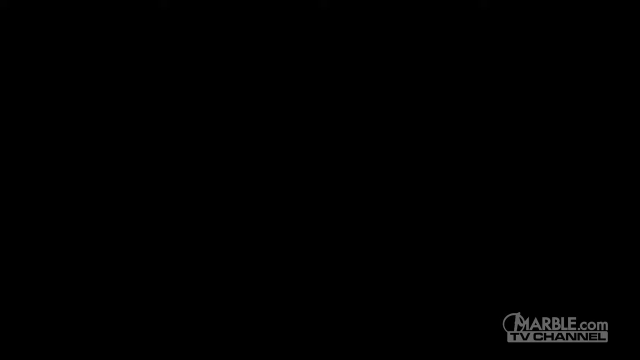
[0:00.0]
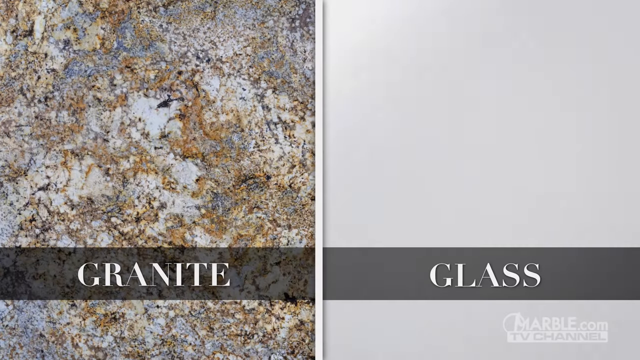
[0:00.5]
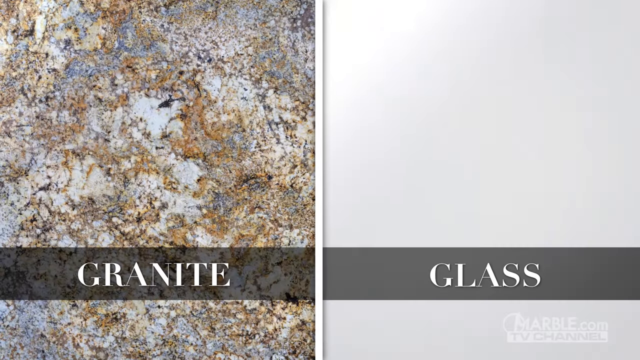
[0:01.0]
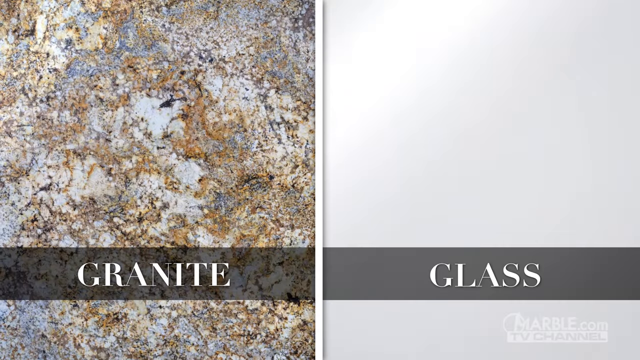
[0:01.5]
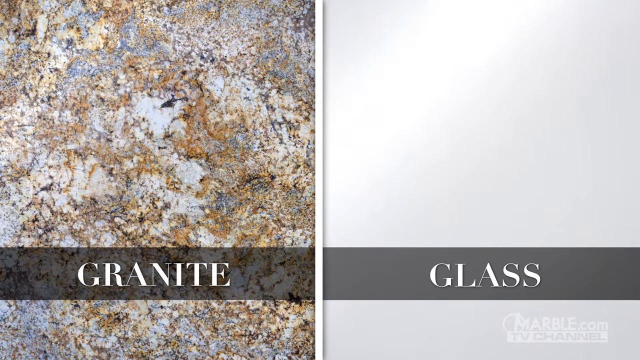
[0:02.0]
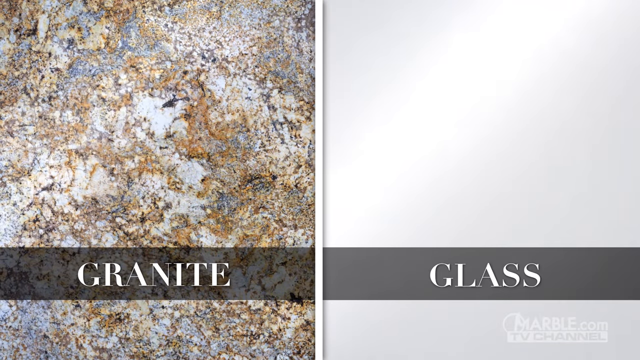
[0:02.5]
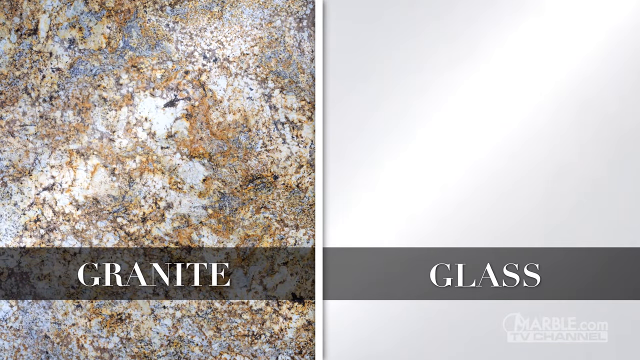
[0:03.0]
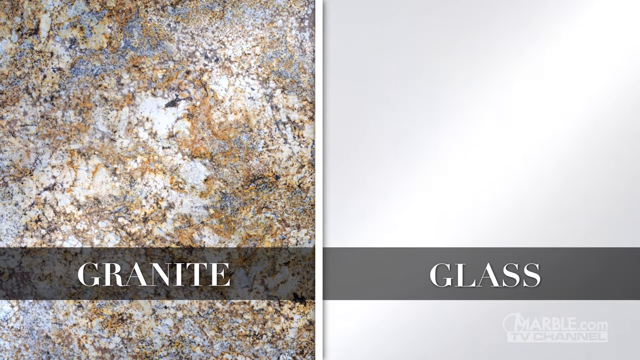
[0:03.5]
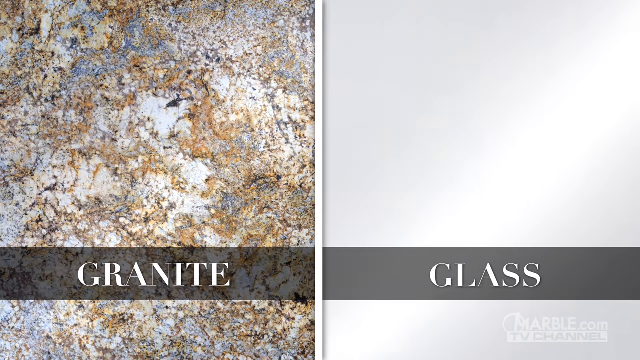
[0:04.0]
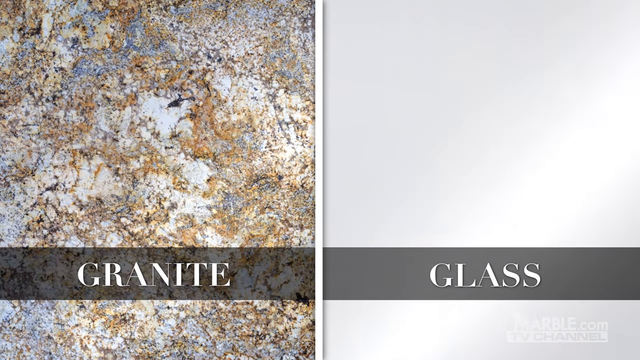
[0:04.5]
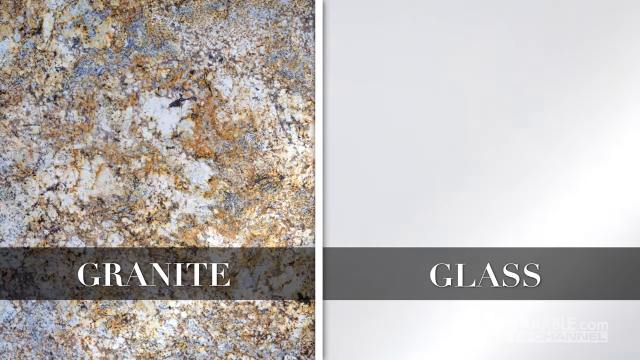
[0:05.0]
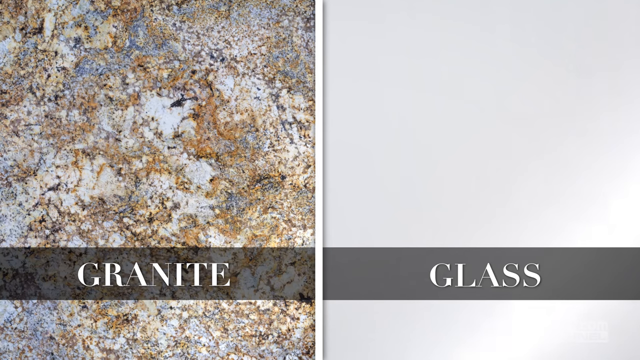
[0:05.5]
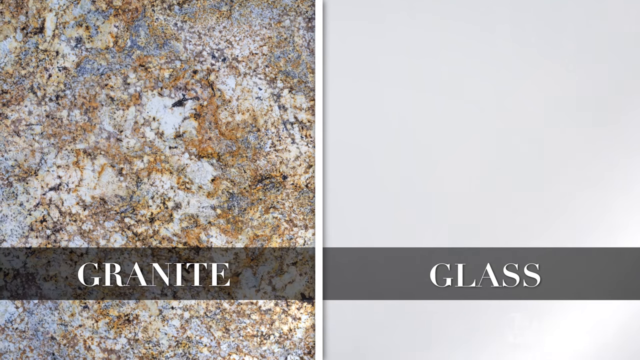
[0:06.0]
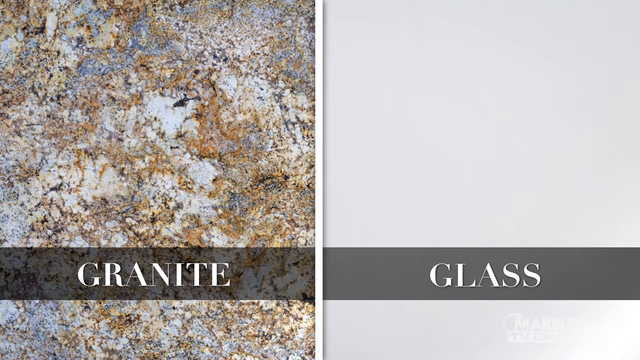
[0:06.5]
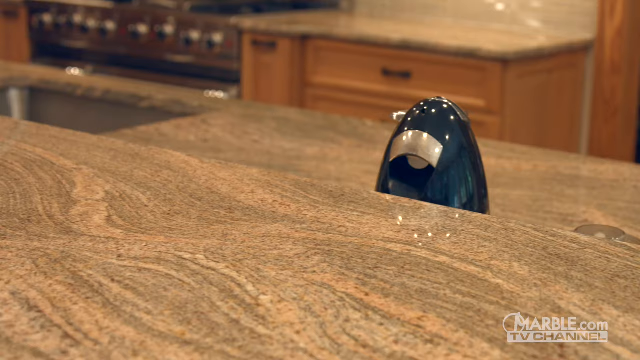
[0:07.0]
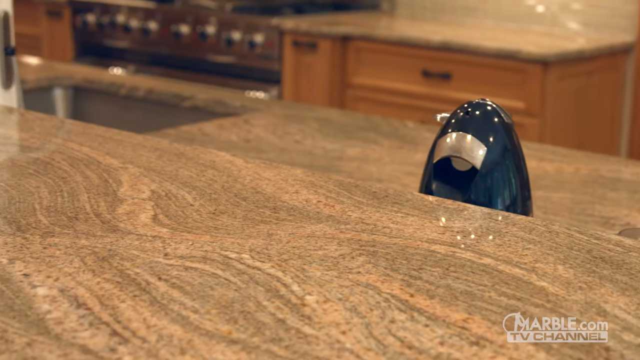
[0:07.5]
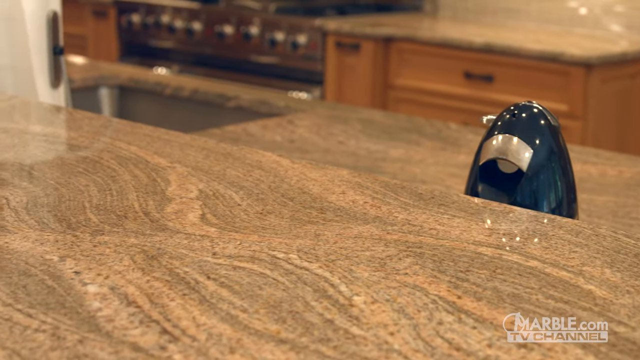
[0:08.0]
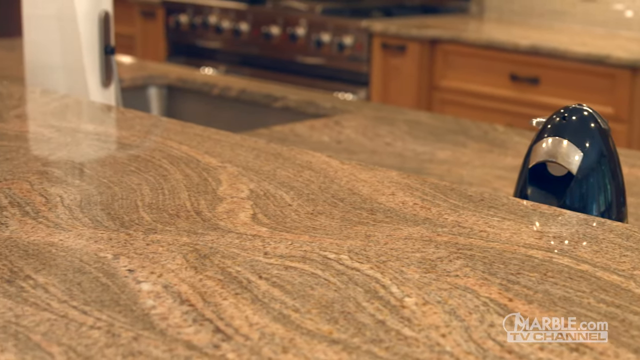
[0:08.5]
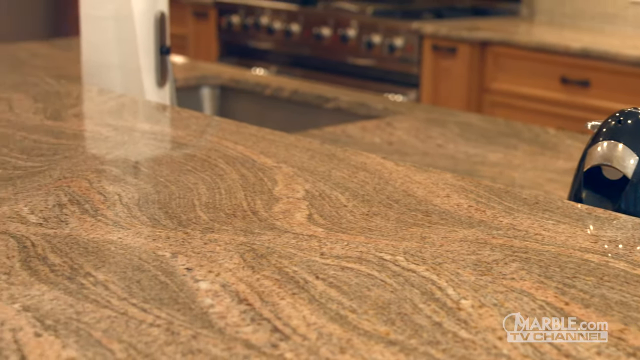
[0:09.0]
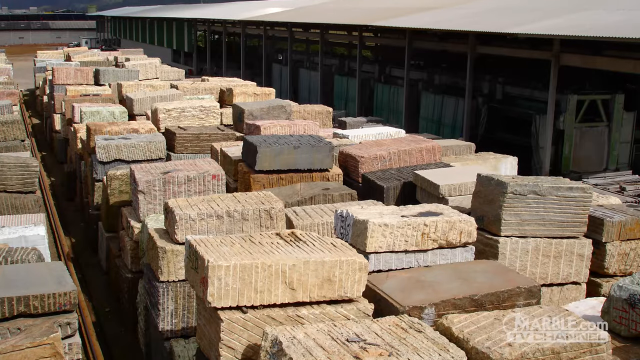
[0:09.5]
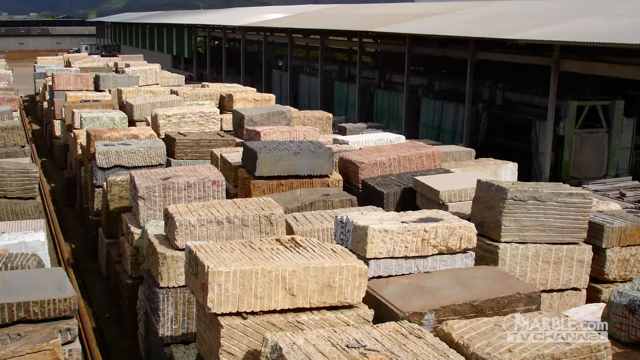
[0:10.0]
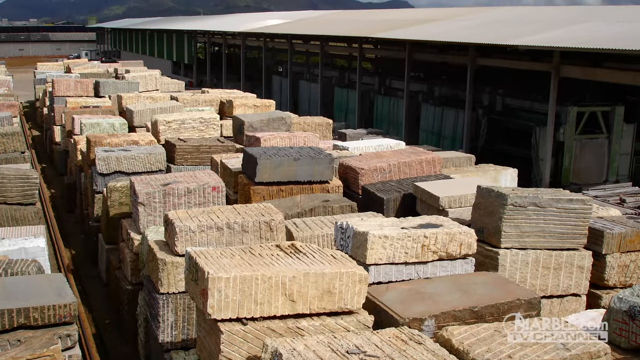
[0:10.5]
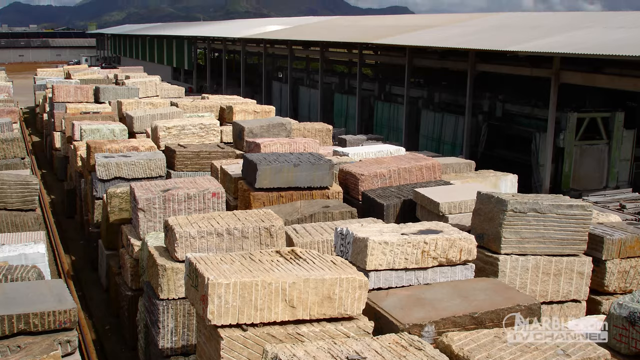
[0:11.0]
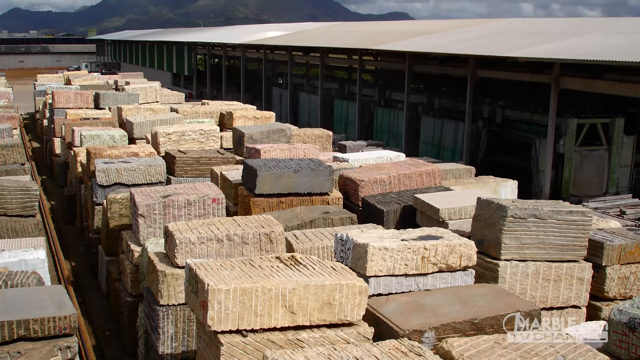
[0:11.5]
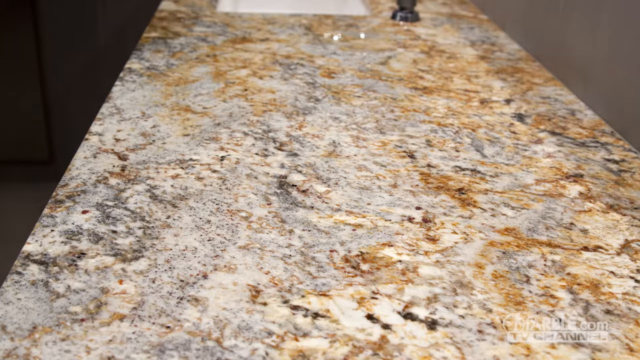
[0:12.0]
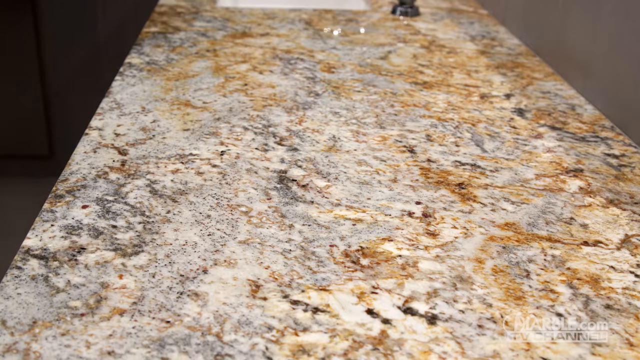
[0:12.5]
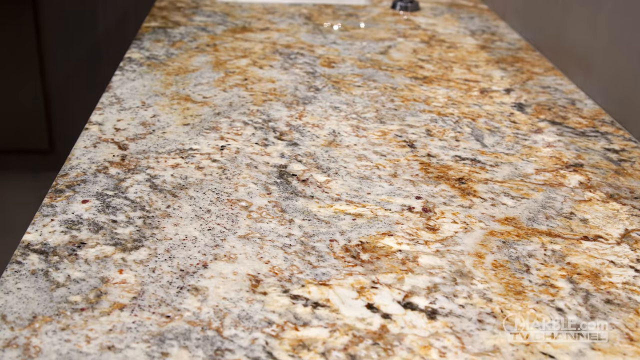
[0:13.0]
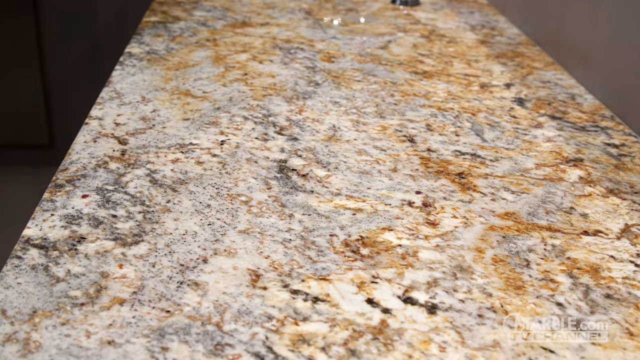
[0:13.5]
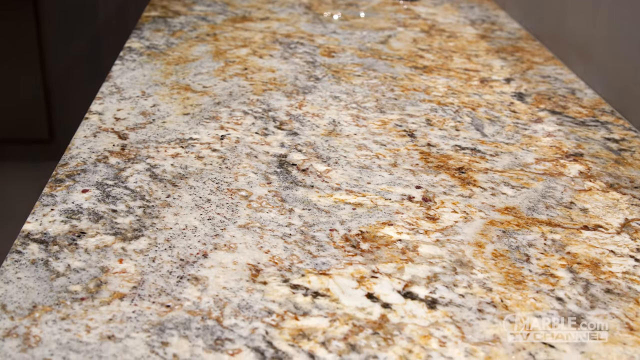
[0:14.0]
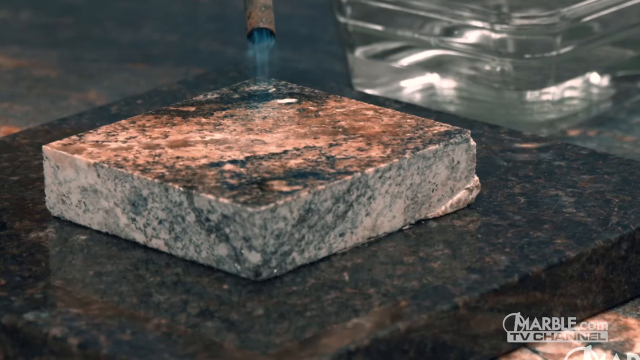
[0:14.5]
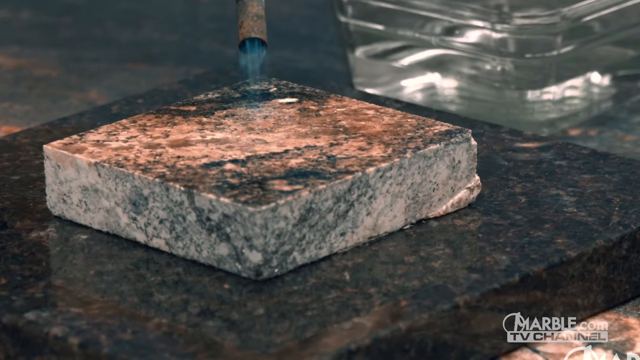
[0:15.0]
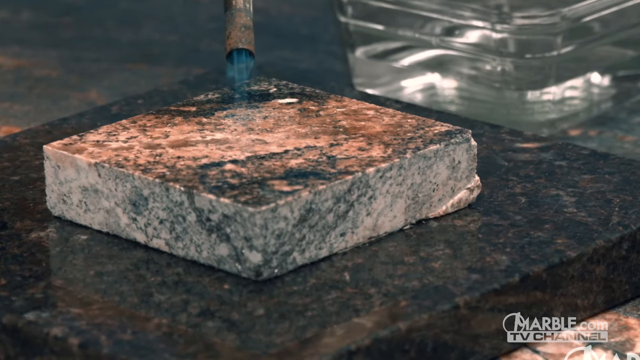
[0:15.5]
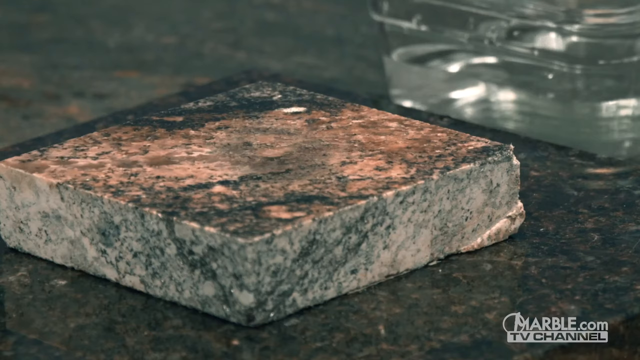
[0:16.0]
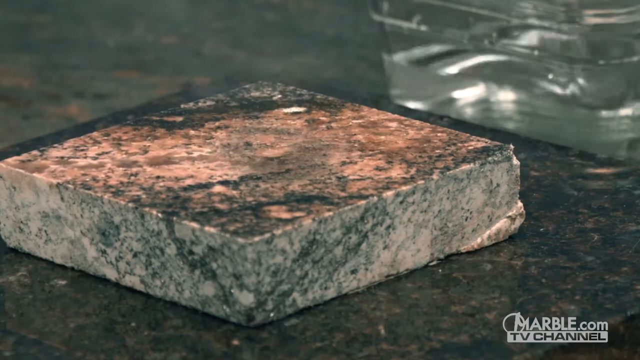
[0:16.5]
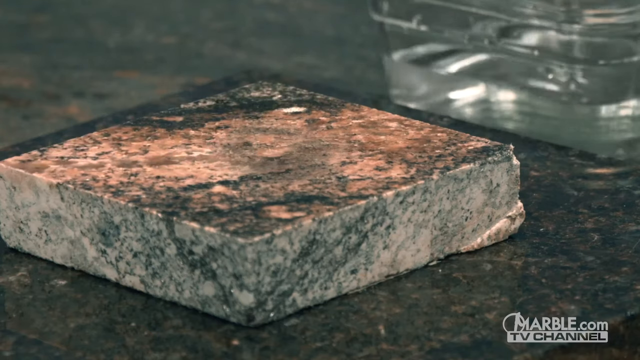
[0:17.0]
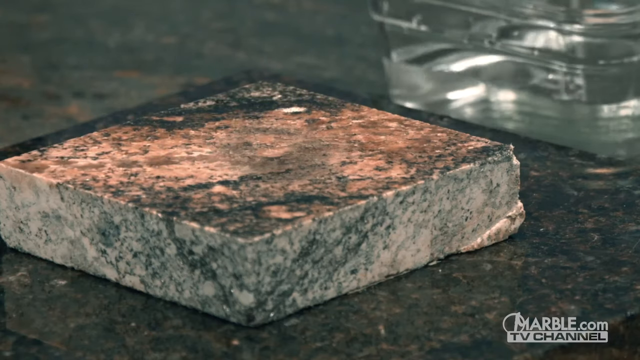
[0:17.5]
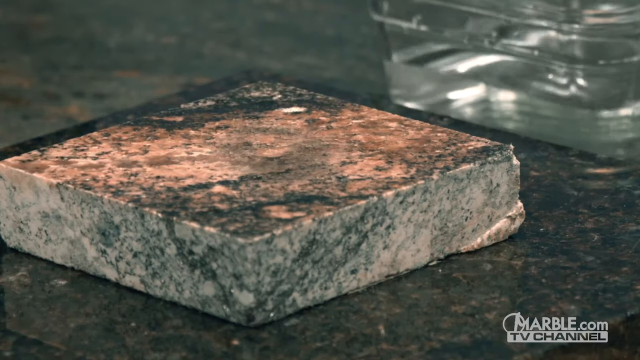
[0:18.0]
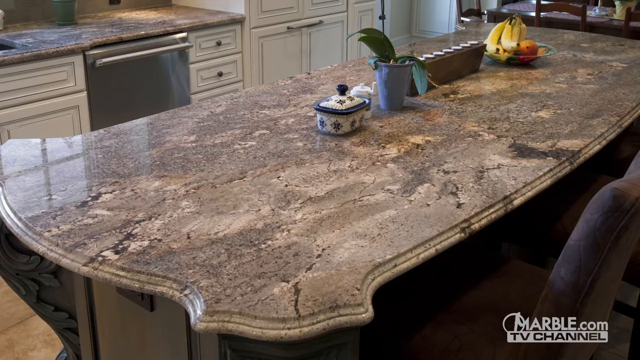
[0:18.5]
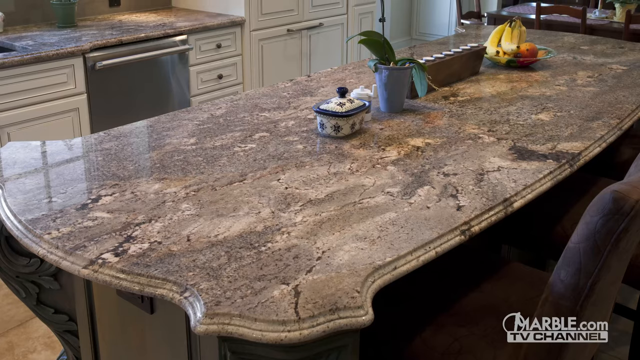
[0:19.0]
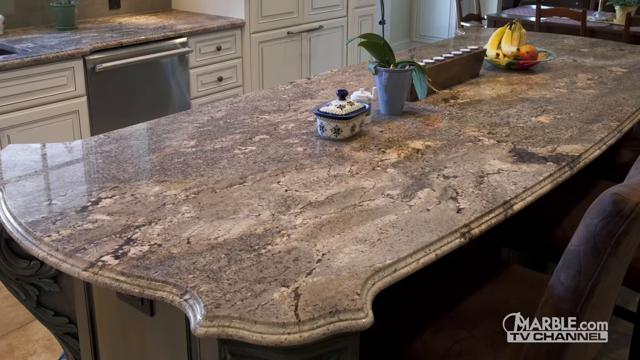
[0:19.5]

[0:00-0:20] Two separate images appear in the middle of the frame: on the left is granite, strongly highlighted, and on the right is what looks like glass. Next comes a table with several pieces that appear to be granite, in what appears to be a factory where several granite parts are stacked. A finished piece is shown, ready to be passed on to the consumer. The process of making the granite follows, from its initial stage, with fire heating up and smoke coming out as the granite is transformed, to finally being delivered to the customer.